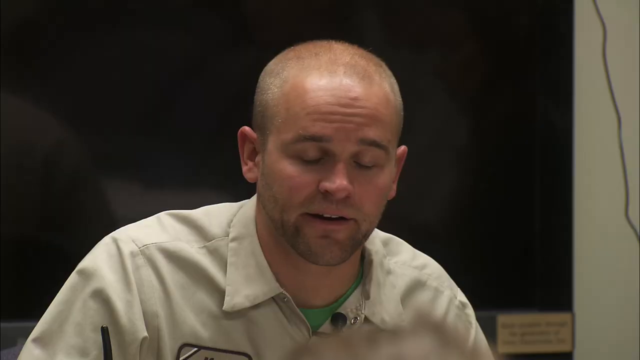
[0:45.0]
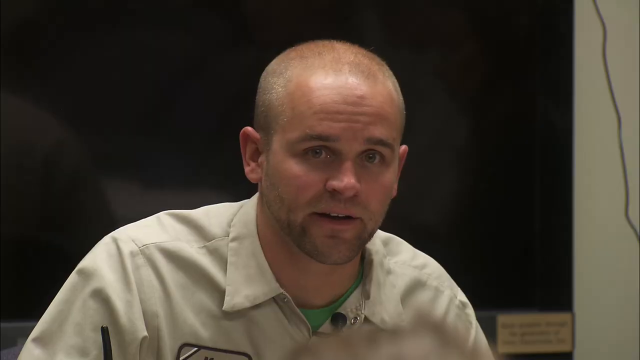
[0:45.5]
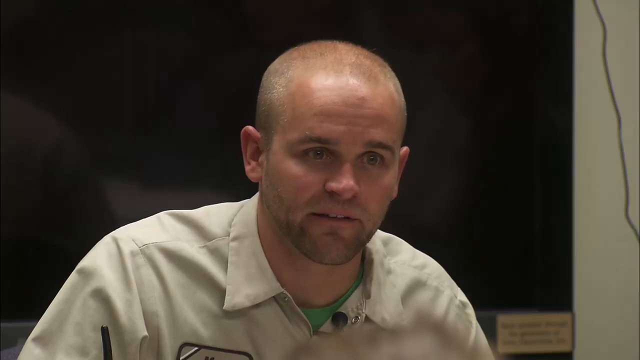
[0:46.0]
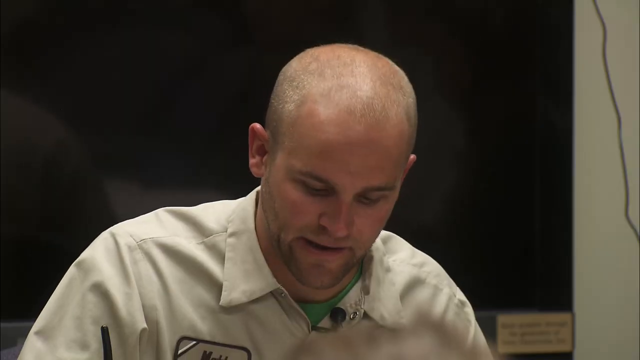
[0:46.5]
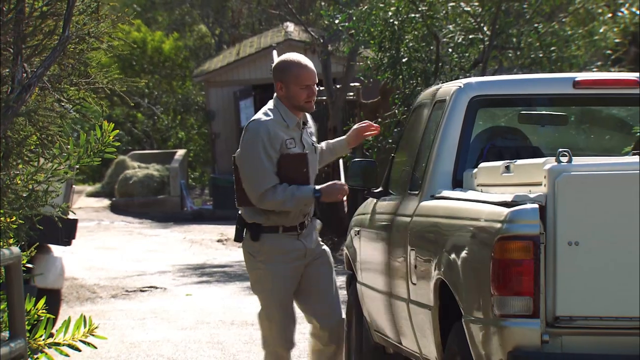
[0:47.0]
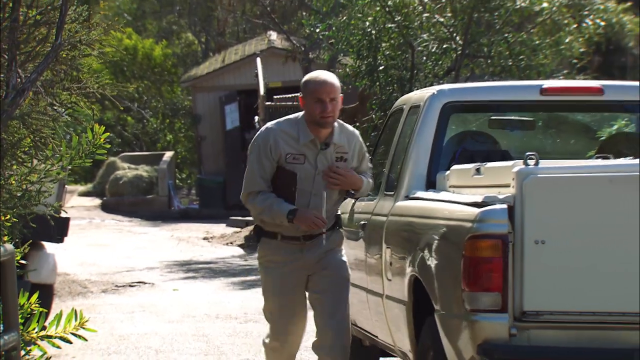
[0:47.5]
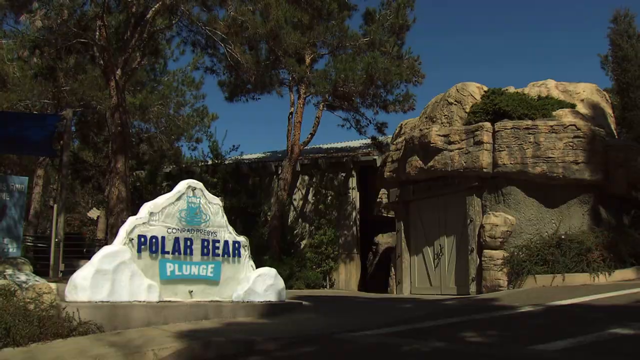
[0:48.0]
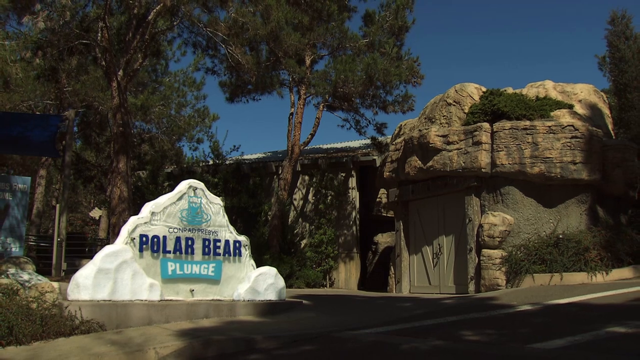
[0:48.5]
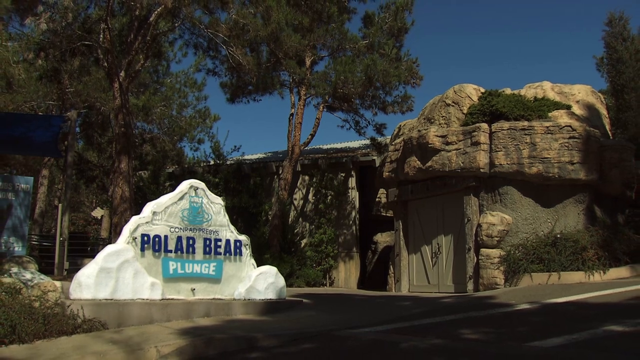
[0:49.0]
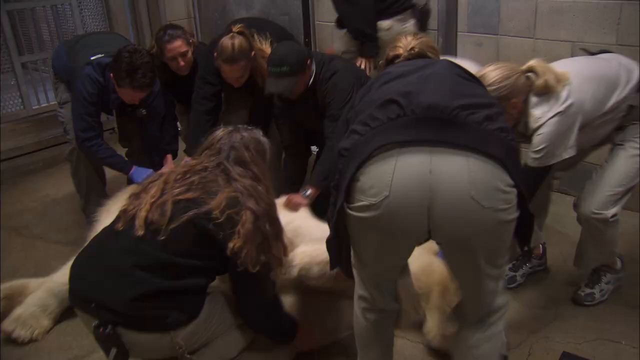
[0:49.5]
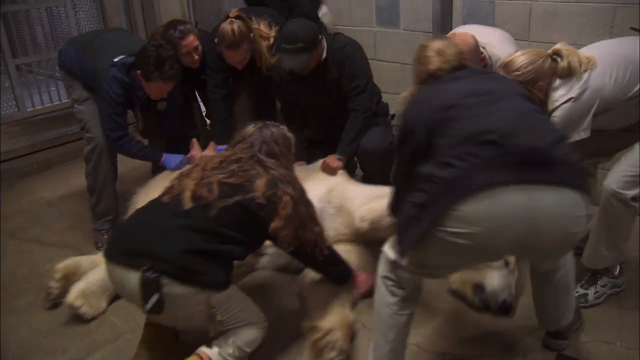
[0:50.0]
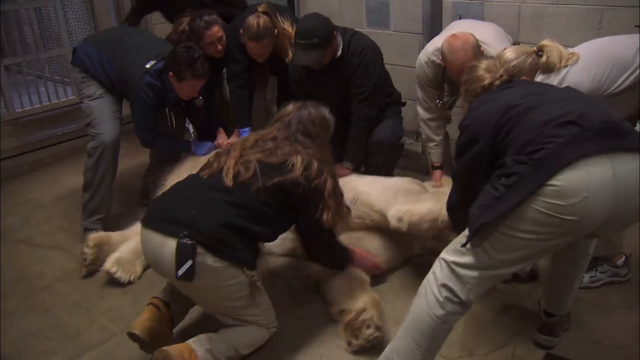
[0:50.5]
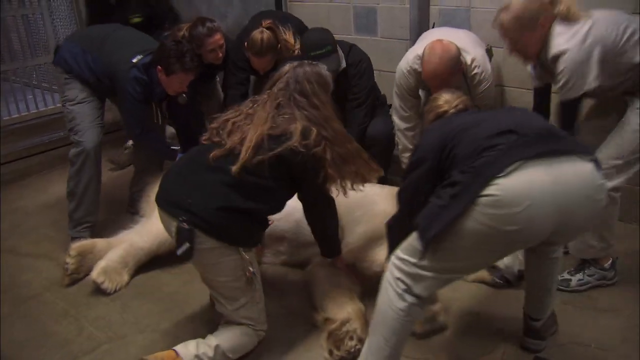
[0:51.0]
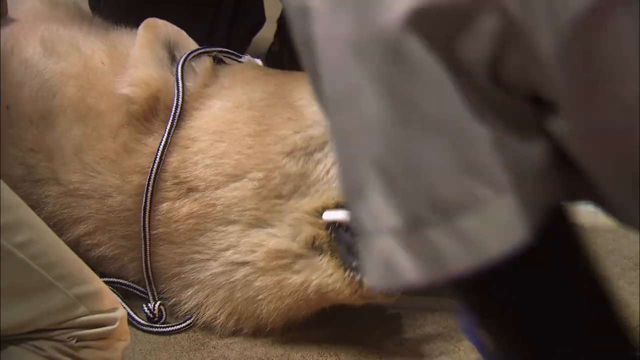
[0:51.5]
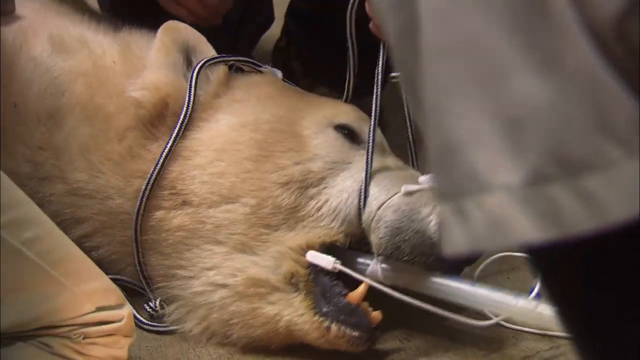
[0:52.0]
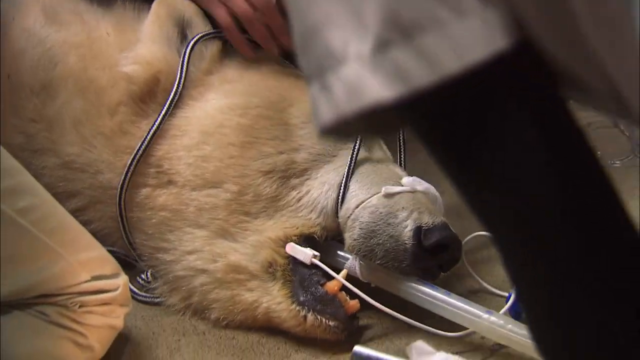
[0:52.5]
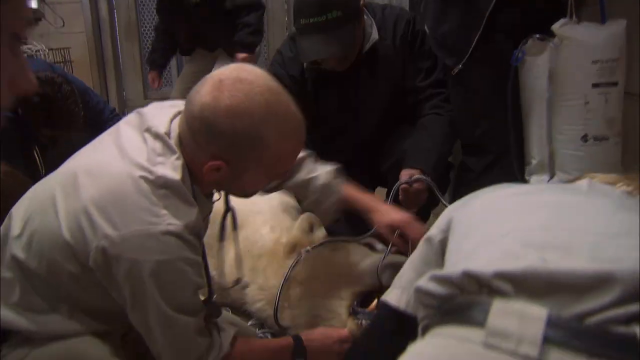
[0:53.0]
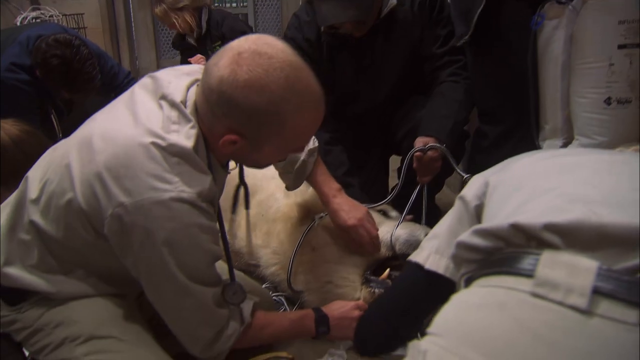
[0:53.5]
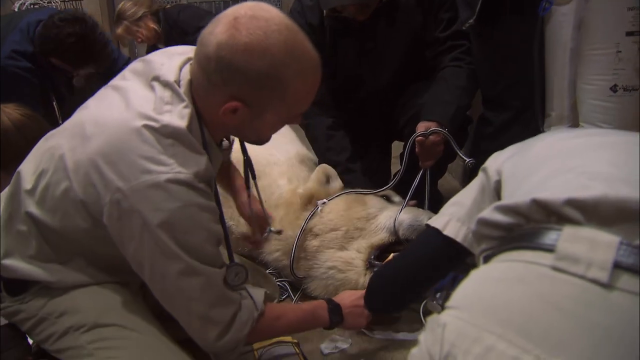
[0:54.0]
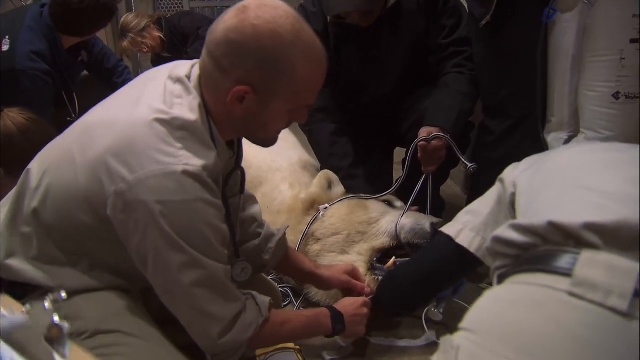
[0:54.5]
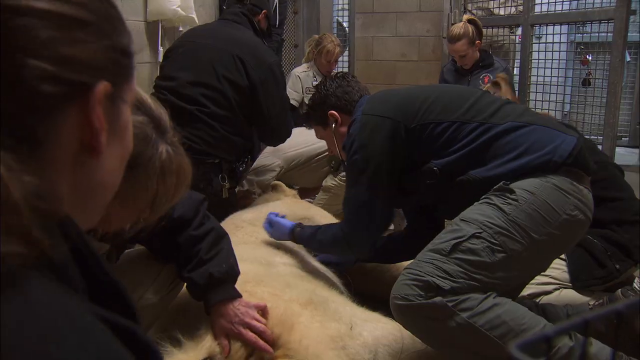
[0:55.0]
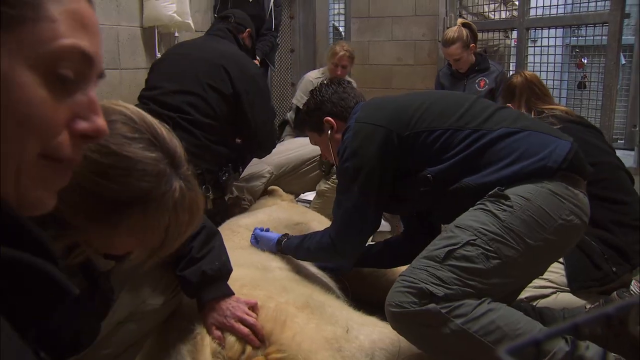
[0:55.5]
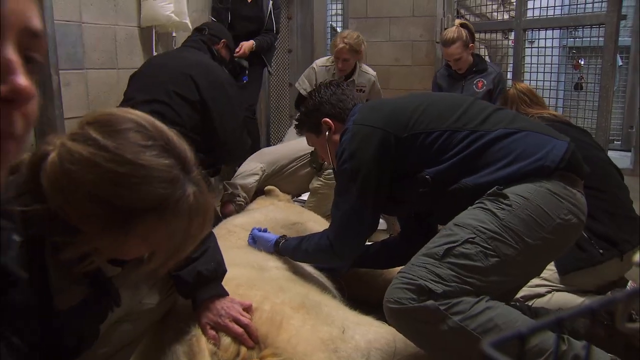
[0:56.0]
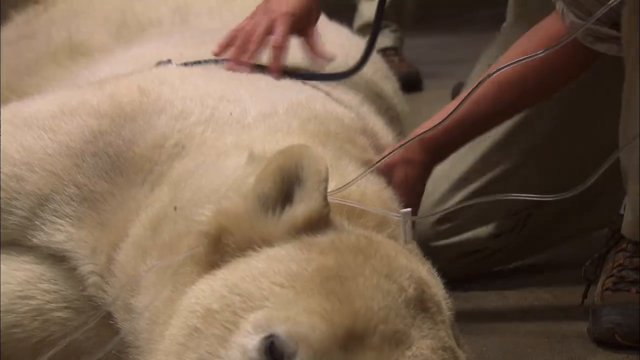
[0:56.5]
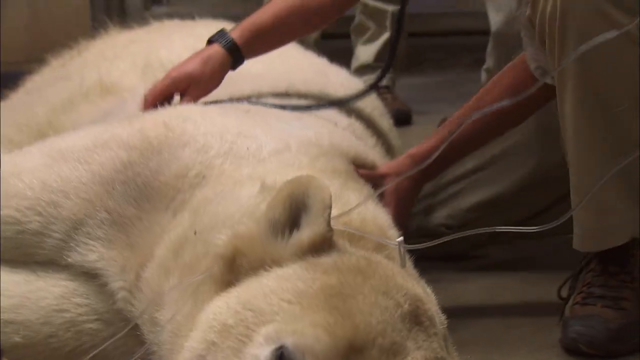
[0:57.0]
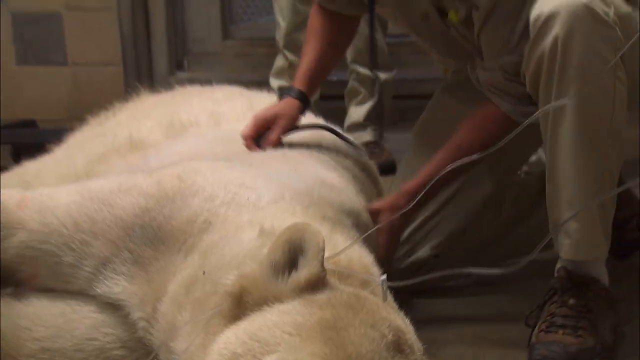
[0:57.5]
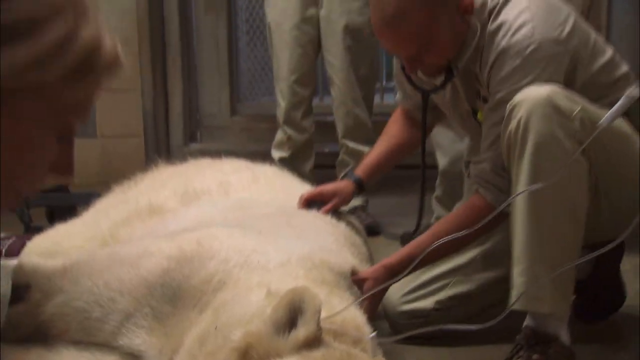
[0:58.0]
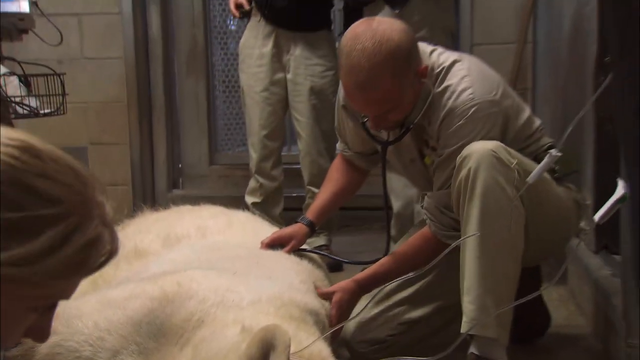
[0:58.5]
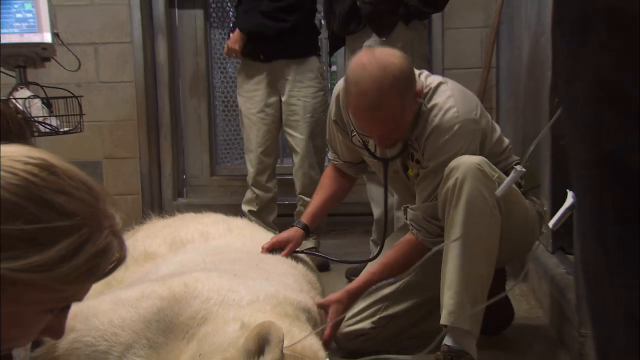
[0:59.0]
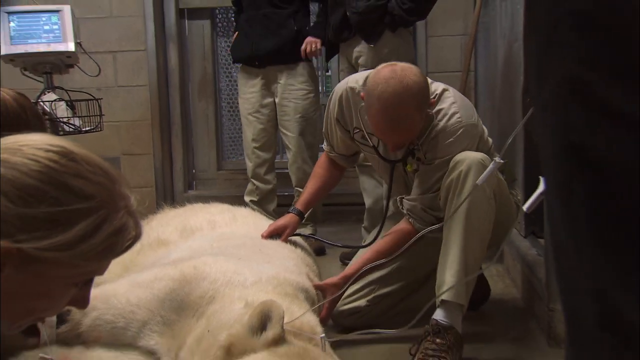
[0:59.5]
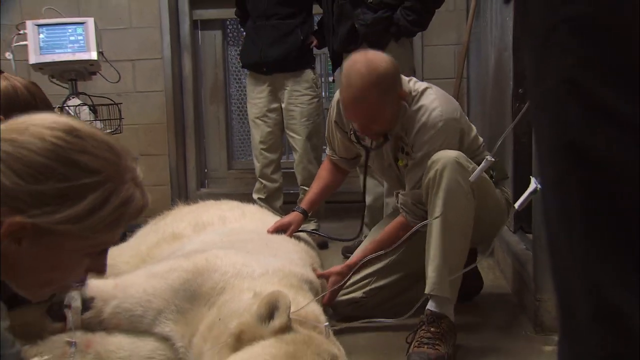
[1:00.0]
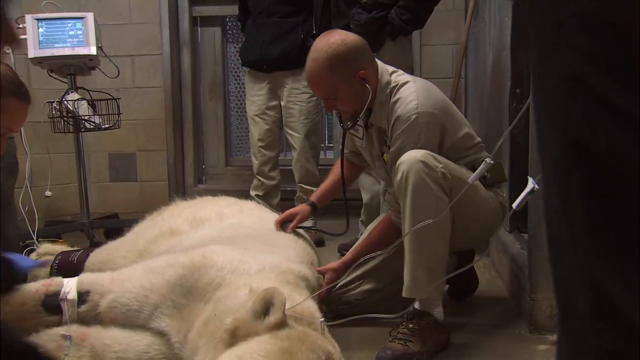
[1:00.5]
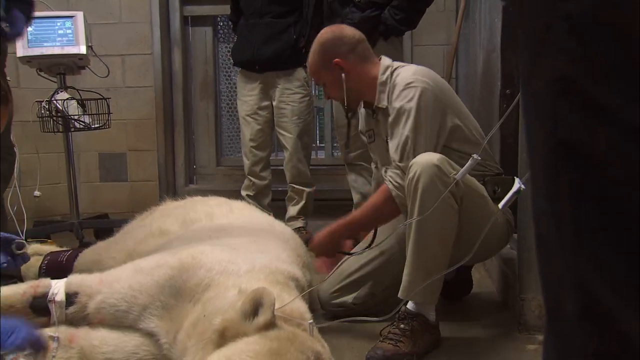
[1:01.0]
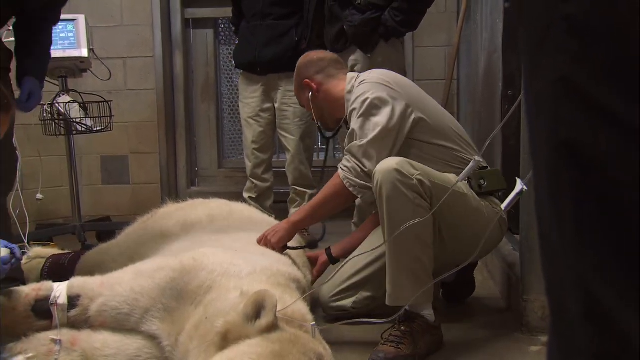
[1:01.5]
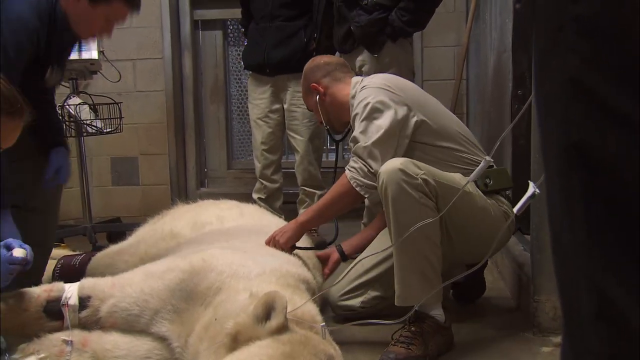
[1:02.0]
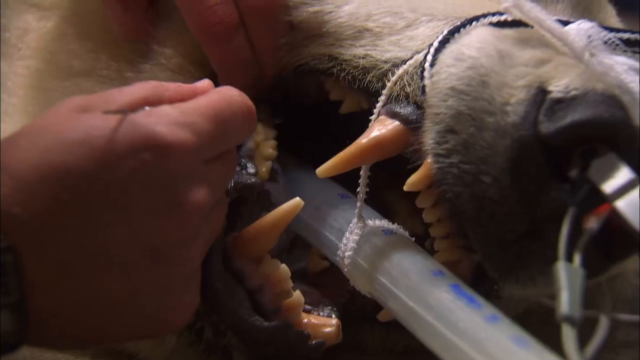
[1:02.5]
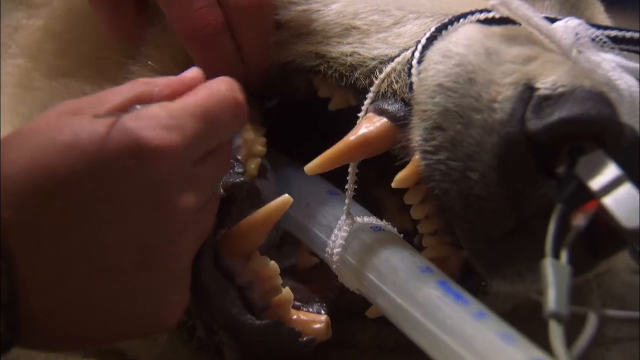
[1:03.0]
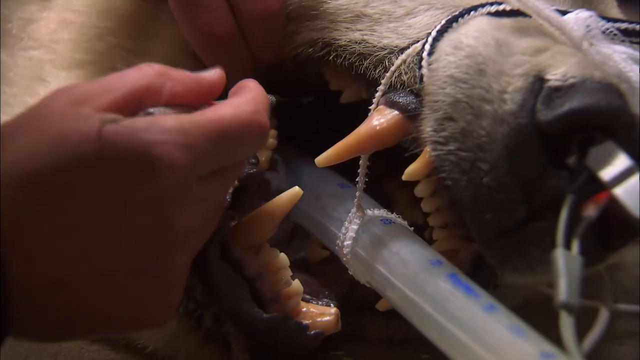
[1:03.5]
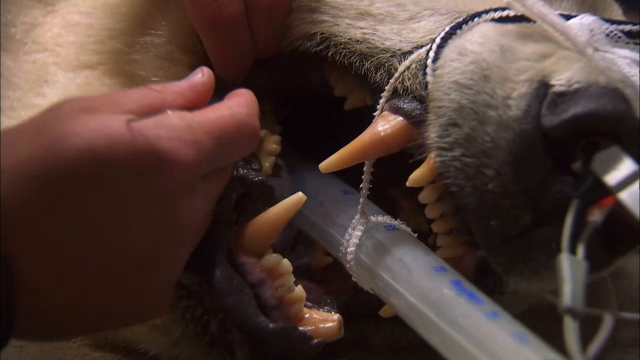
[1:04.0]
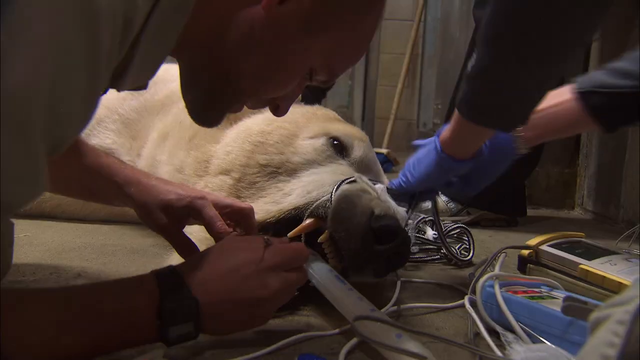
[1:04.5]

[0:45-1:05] The veterinarian pulls up in his truck and goes over to the polar bear exhibit, where a group of others has a large polar bear on the ground. The bear is kind of tied up and is being dragged around on the floor, and it is sick and lies on its side. They put some kind of tubing in its mouth. The veterinarian looks at the bear, doing some kind of testing, and looks over the back and side of the polar bear.